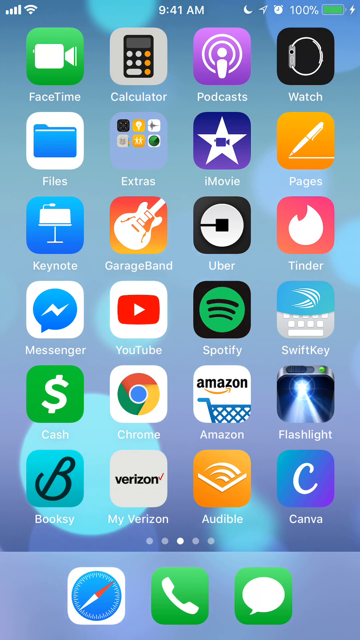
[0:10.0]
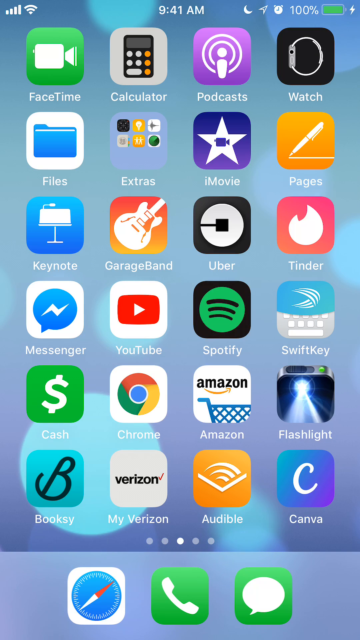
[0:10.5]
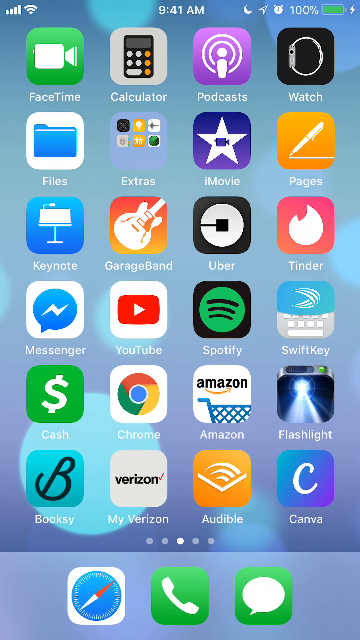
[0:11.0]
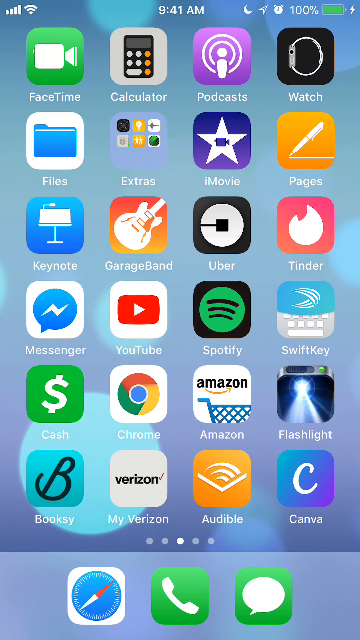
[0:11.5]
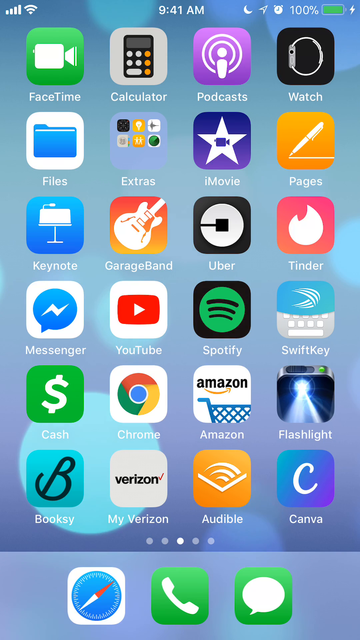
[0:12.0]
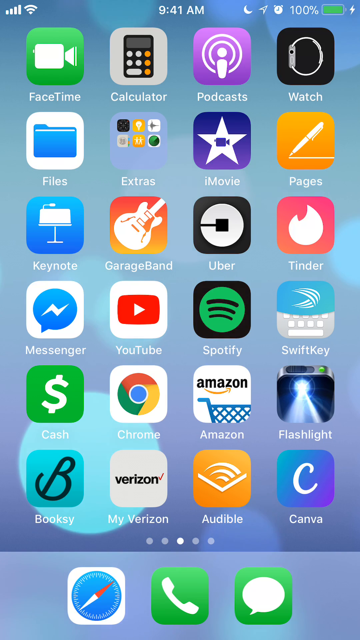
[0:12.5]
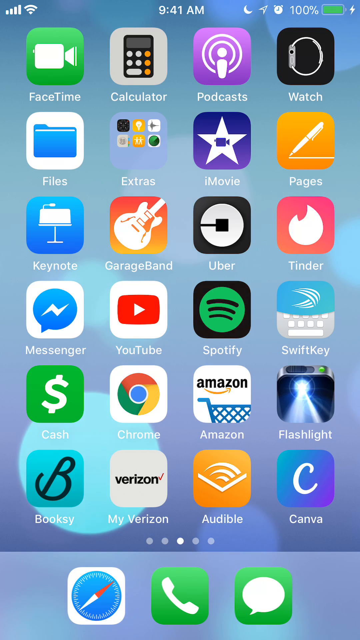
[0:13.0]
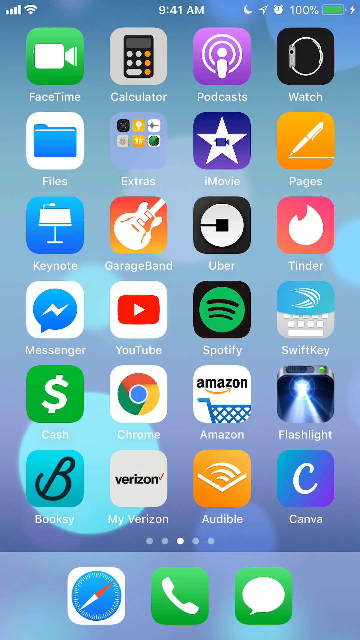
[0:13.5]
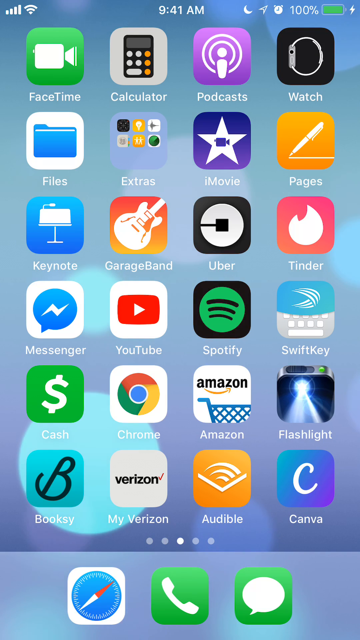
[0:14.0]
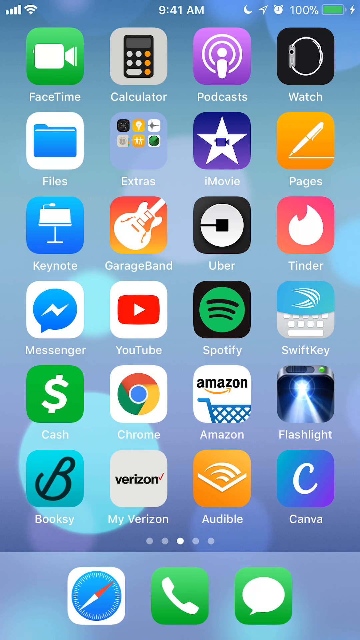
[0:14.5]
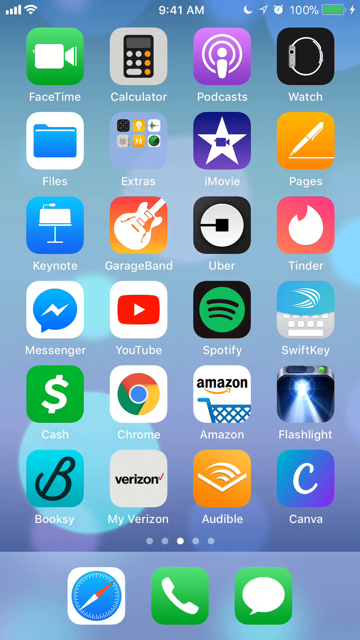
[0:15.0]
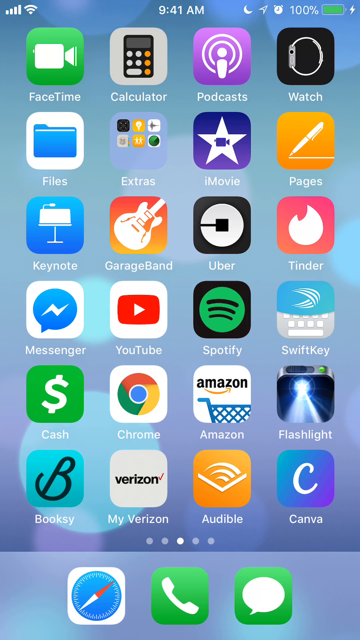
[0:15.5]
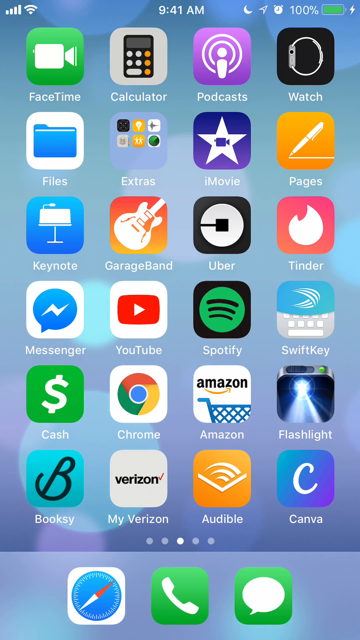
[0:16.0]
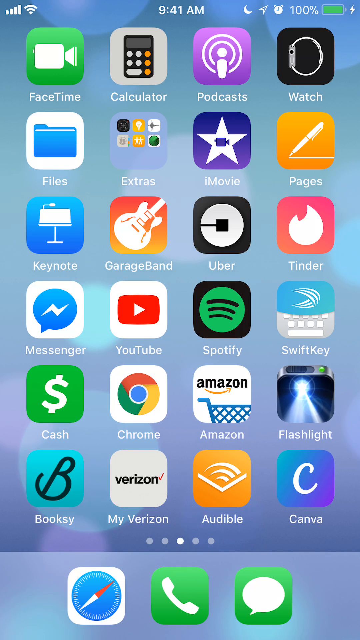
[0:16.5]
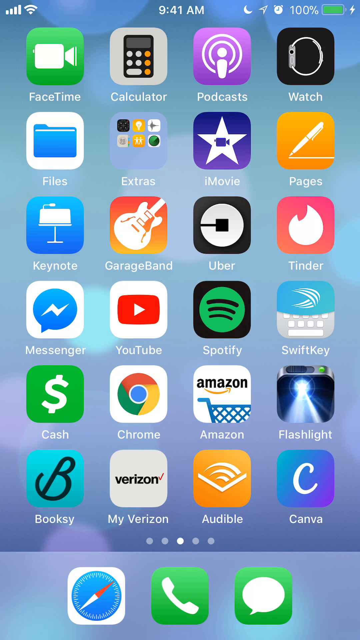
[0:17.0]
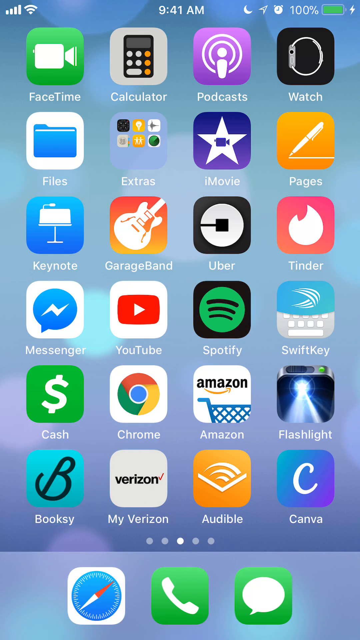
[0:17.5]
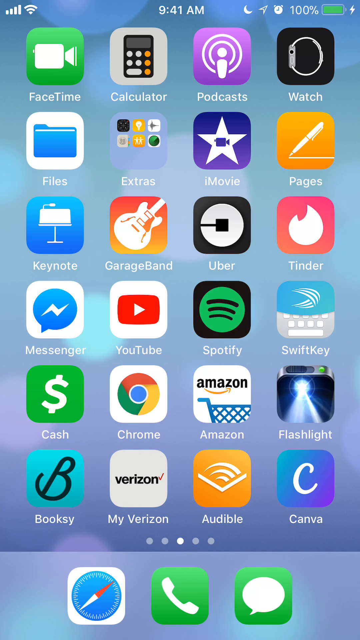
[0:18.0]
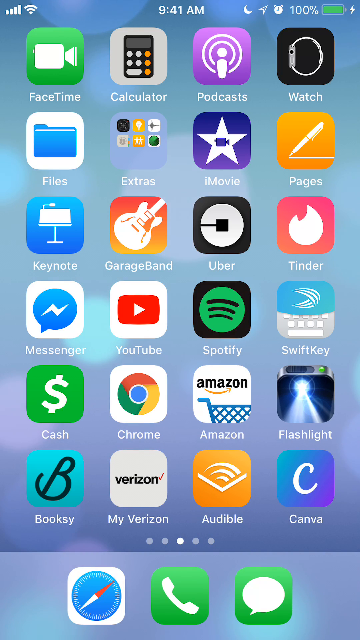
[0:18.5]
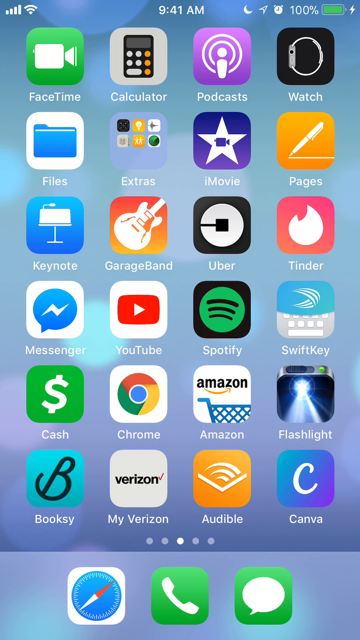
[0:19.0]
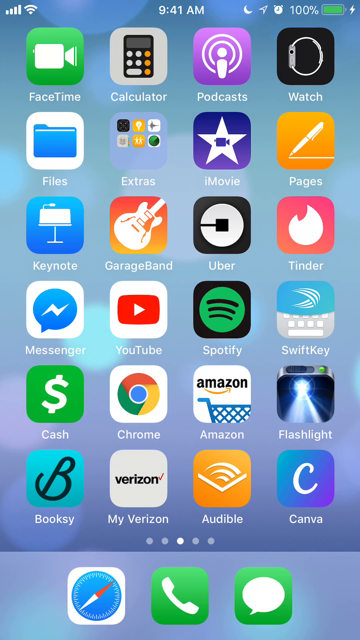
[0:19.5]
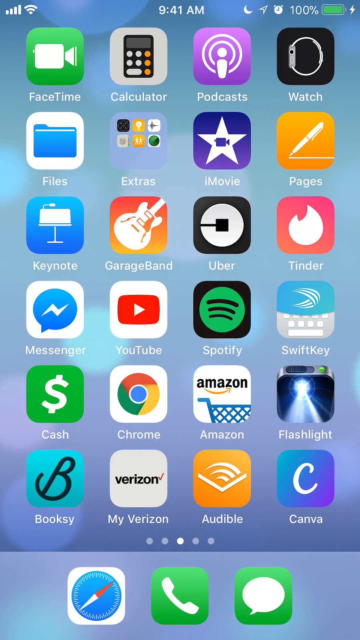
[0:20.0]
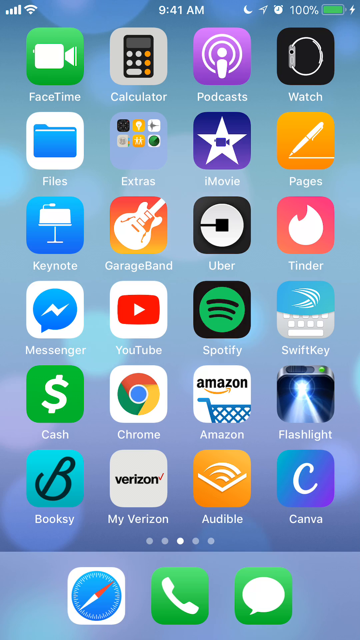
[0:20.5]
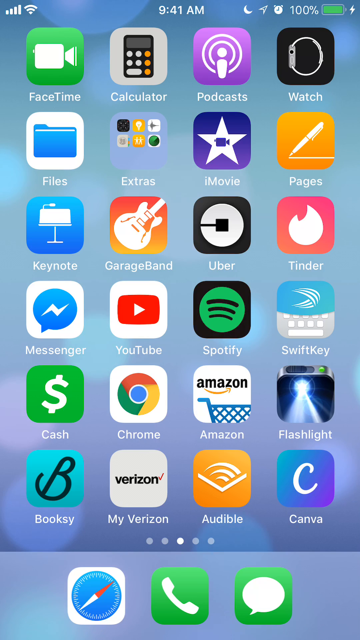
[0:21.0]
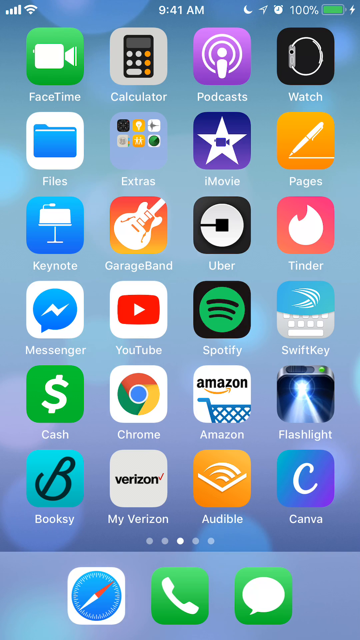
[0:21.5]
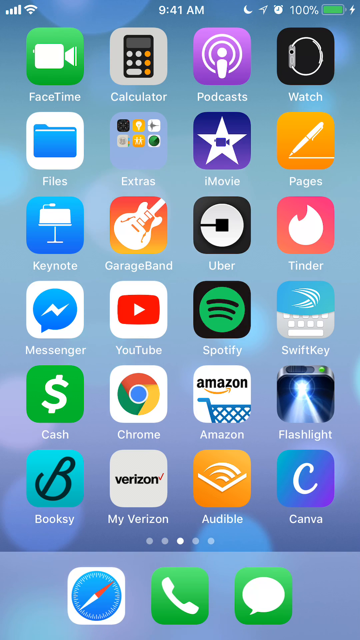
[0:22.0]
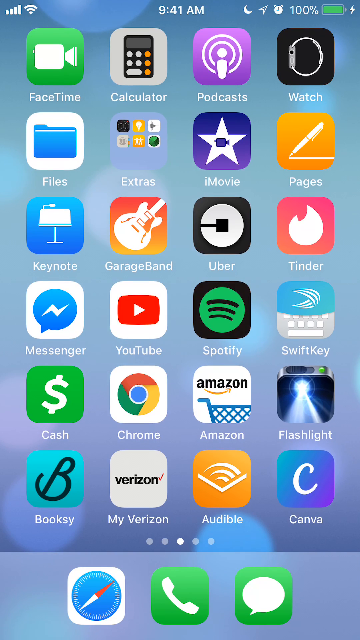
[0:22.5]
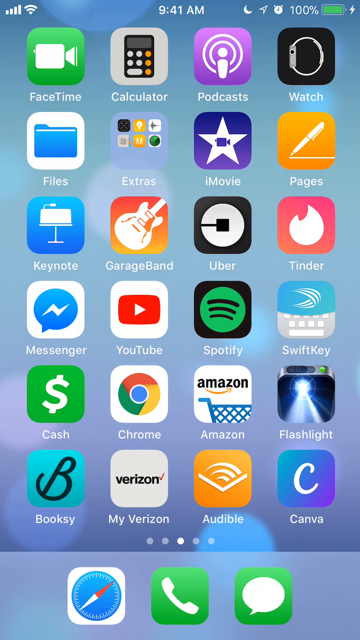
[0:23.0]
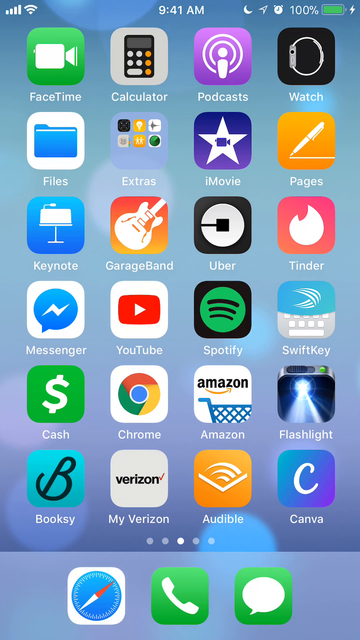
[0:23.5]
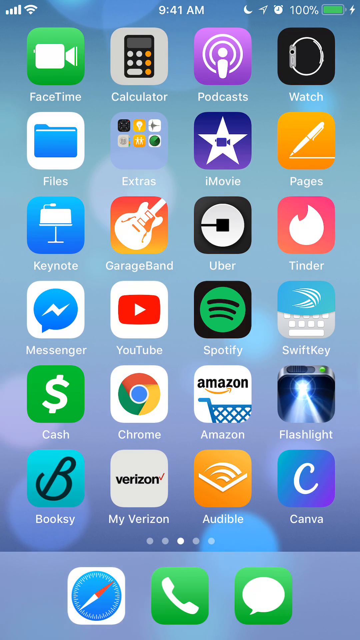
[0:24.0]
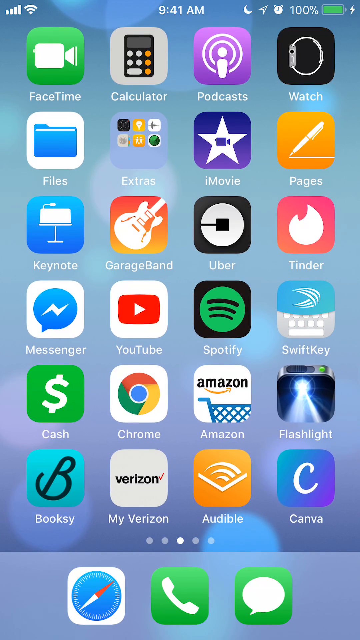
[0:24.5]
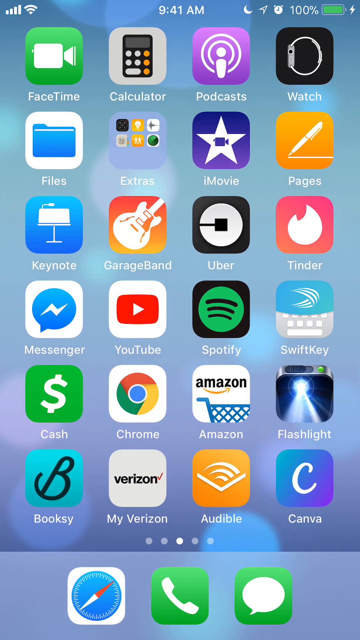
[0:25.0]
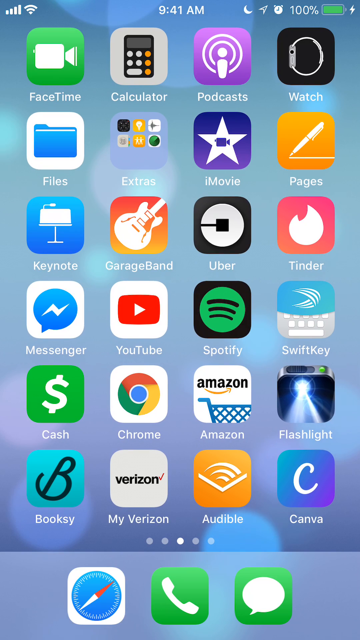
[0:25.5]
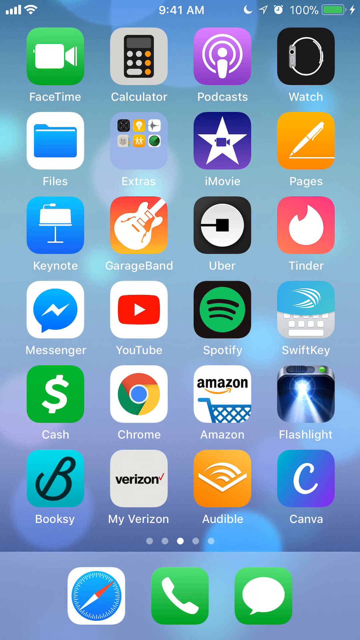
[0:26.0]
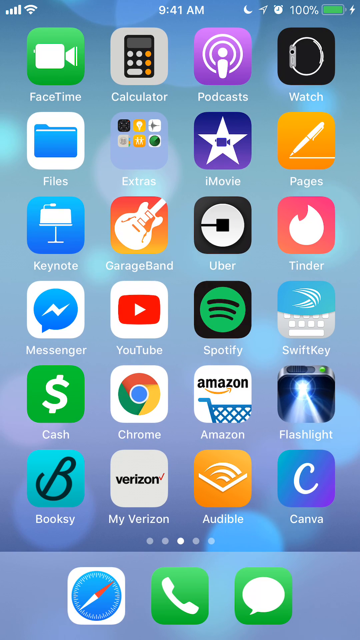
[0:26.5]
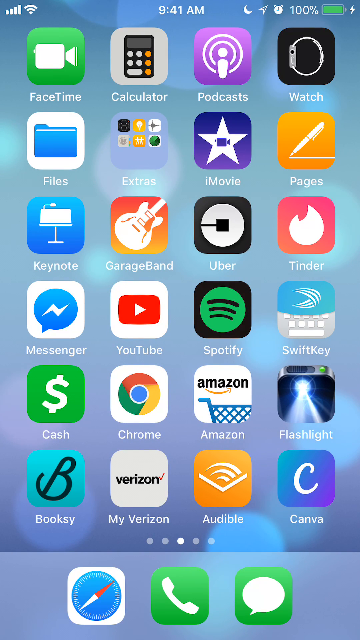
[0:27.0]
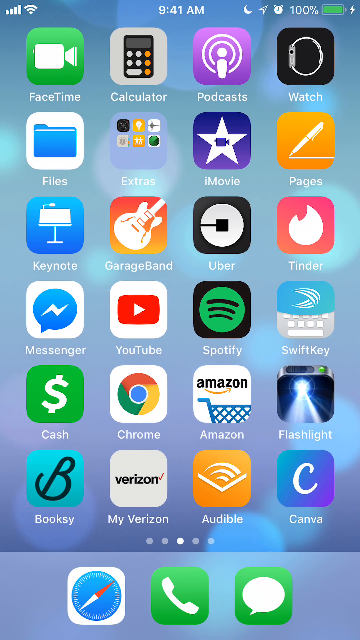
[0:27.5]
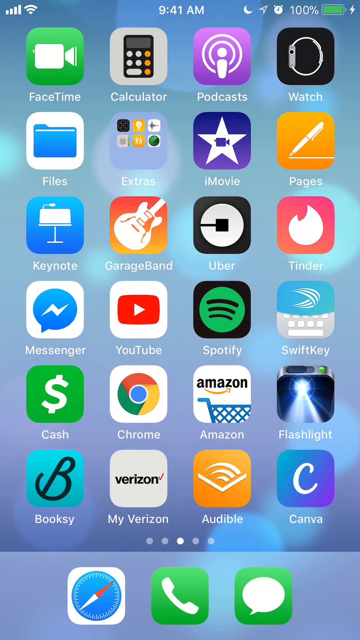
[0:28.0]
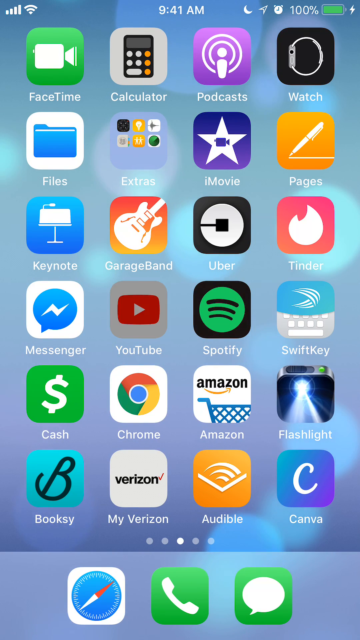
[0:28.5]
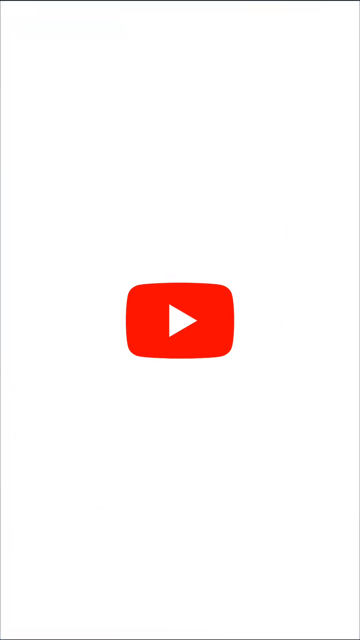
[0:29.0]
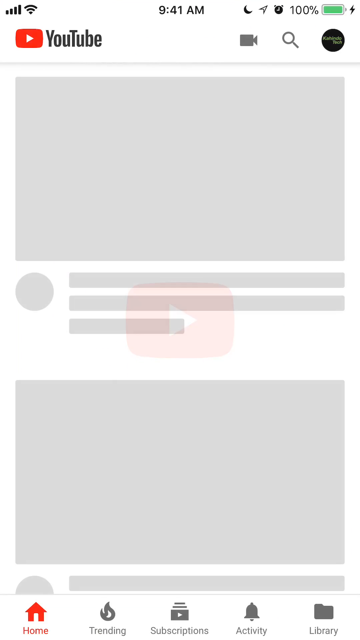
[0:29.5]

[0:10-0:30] What looks like an iPhone screen shows lots of app icons, including FaceTime, Calculator, Podcast, Pages, GarageBand, Keynote, Tinder, Uber, Spotify, SwiftKey Keyboard, Cash, Chrome, Amazon Flashlight, My Verizon, Audible and Canva. The animated background consists of circular patterns like air bubbles moving around behind the icons; the bubbles are many sizes, and some change opacity and vanish while other circular patterns appear. The user taps the YouTube icon, which opens the YouTube application, showing the YouTube logo: a red shape with a play icon at the center on a white background.